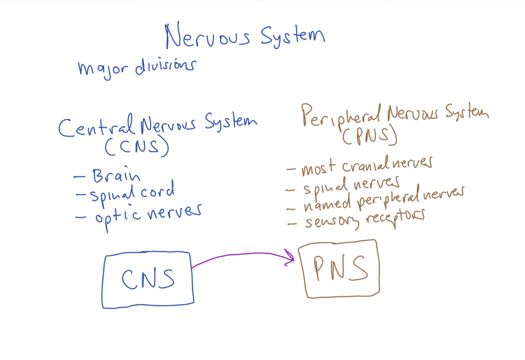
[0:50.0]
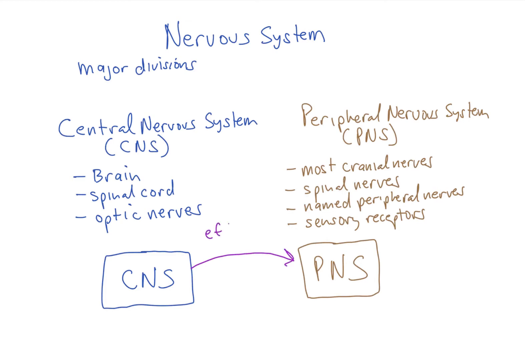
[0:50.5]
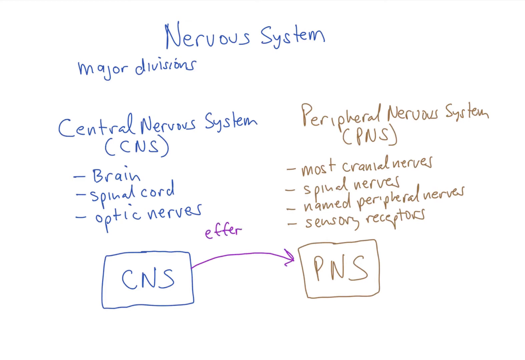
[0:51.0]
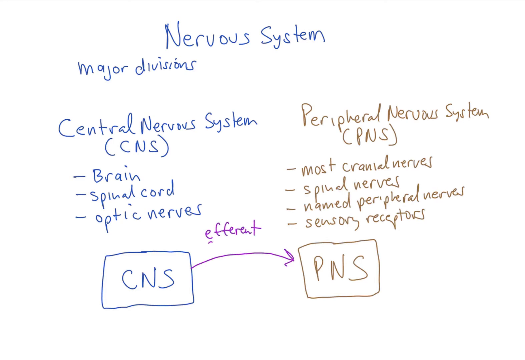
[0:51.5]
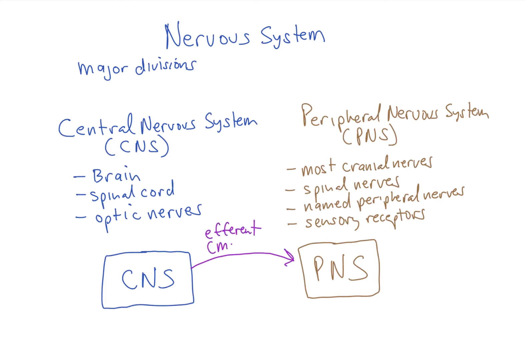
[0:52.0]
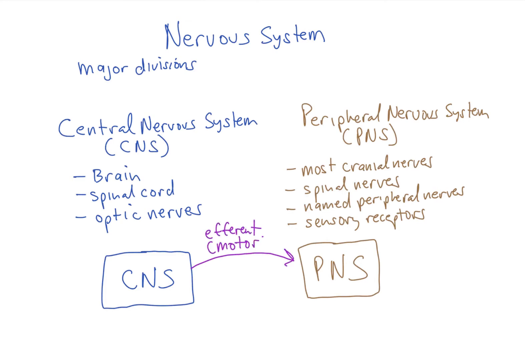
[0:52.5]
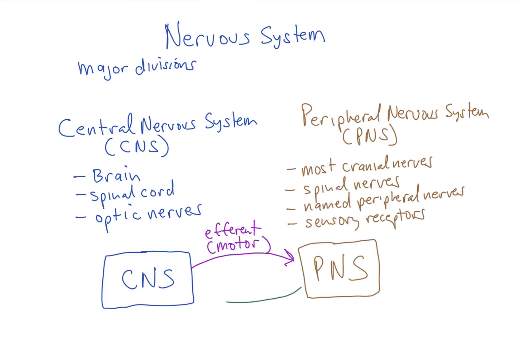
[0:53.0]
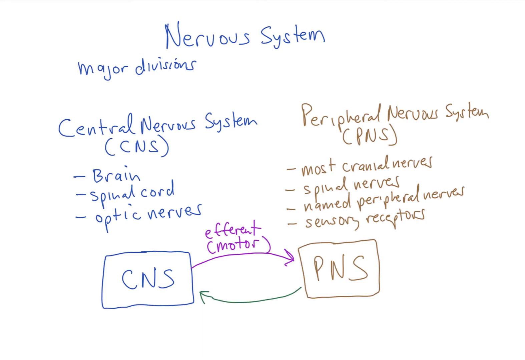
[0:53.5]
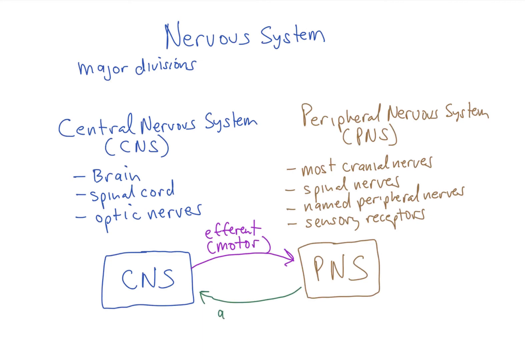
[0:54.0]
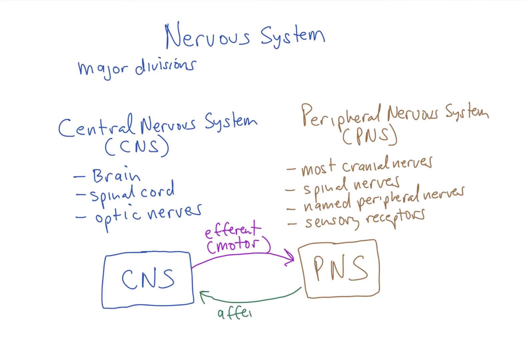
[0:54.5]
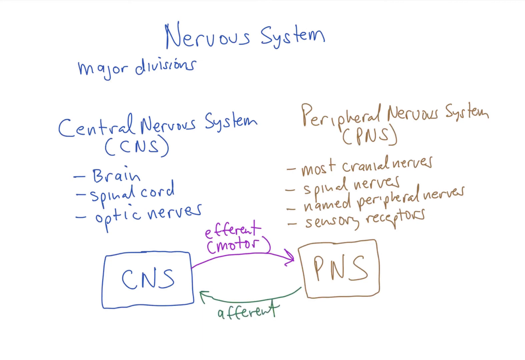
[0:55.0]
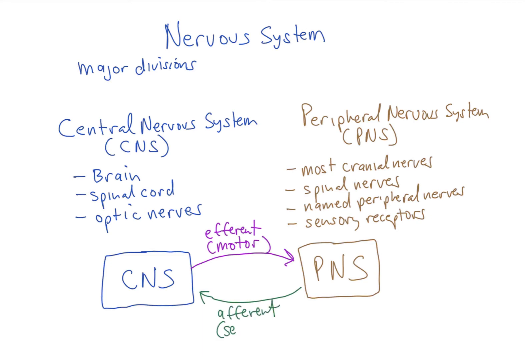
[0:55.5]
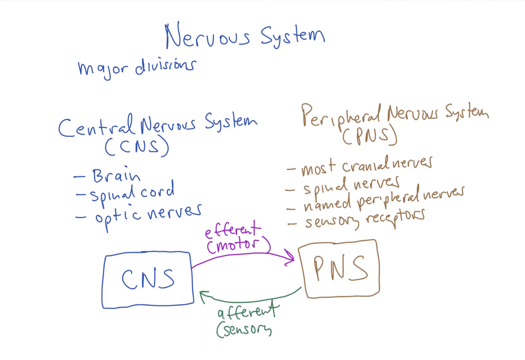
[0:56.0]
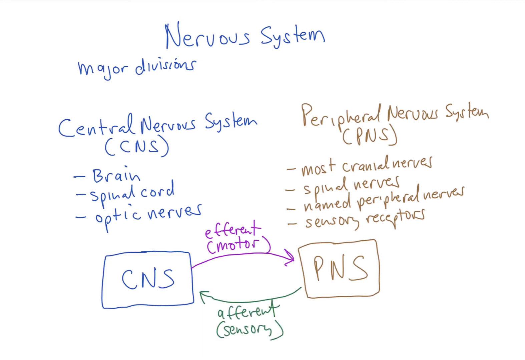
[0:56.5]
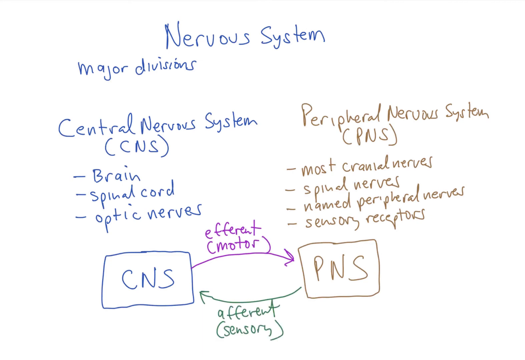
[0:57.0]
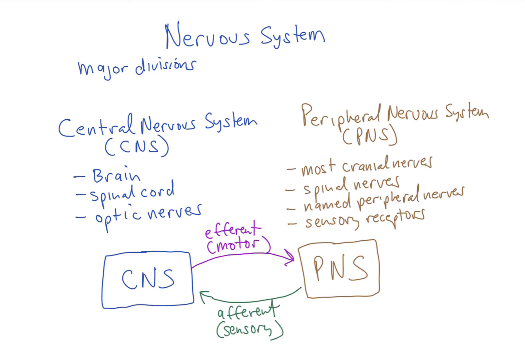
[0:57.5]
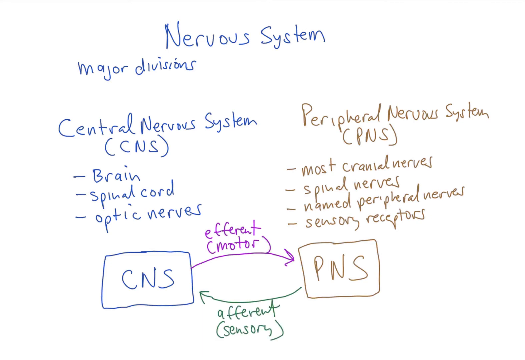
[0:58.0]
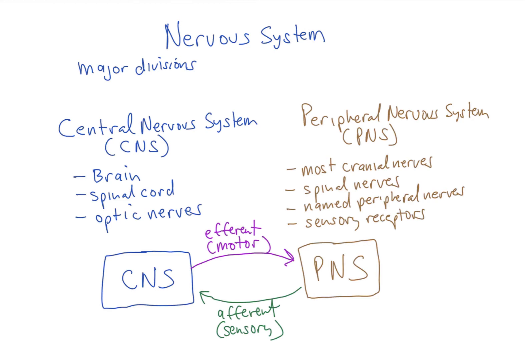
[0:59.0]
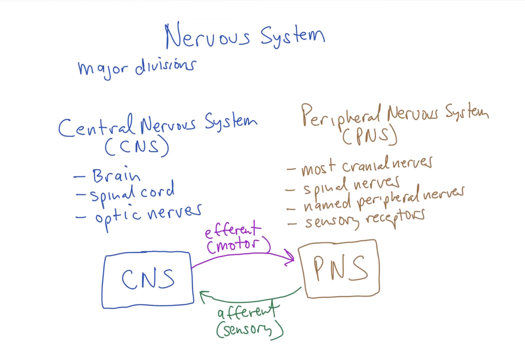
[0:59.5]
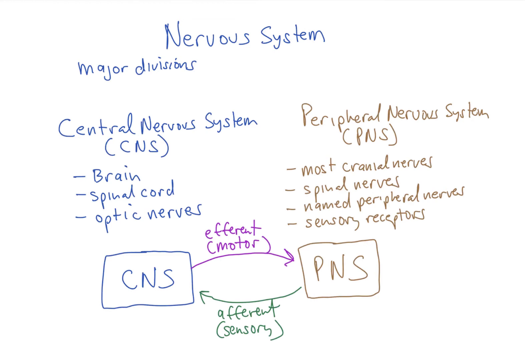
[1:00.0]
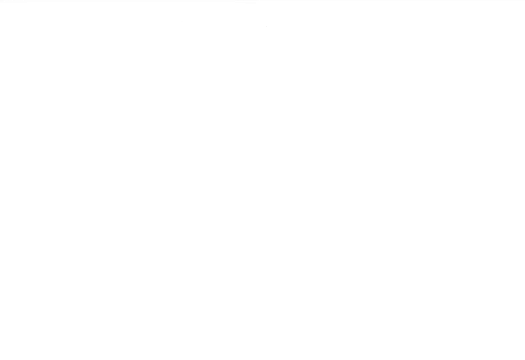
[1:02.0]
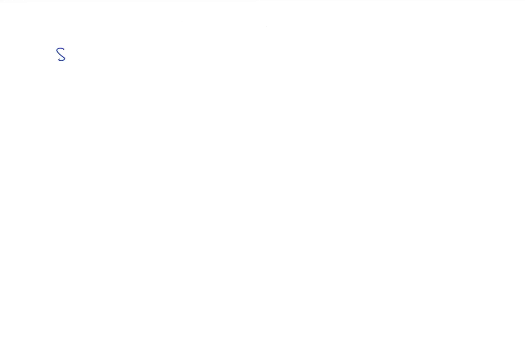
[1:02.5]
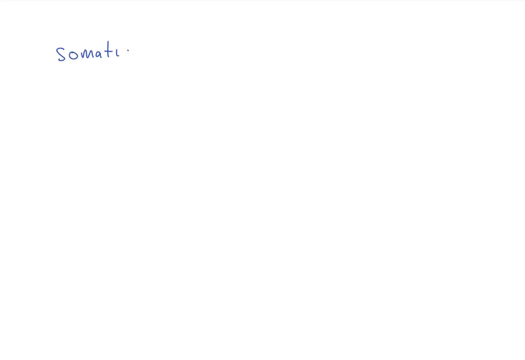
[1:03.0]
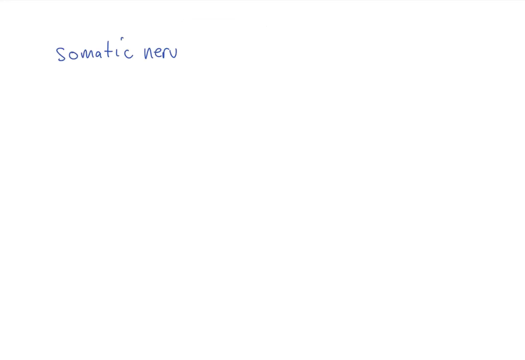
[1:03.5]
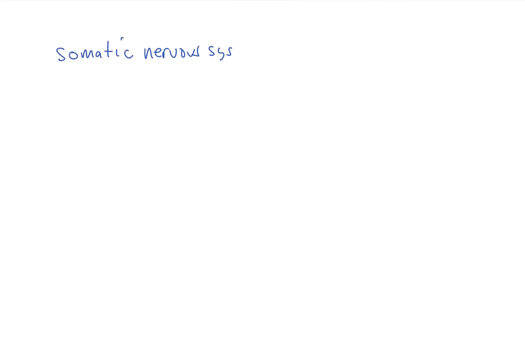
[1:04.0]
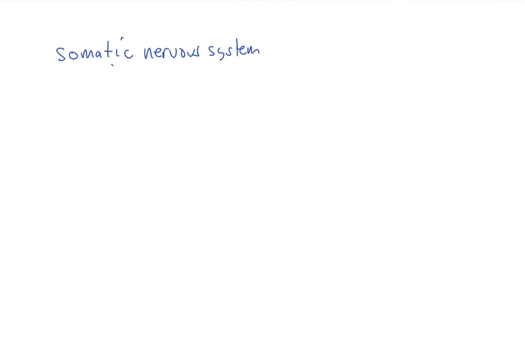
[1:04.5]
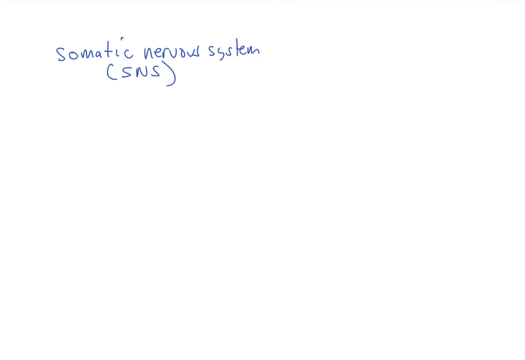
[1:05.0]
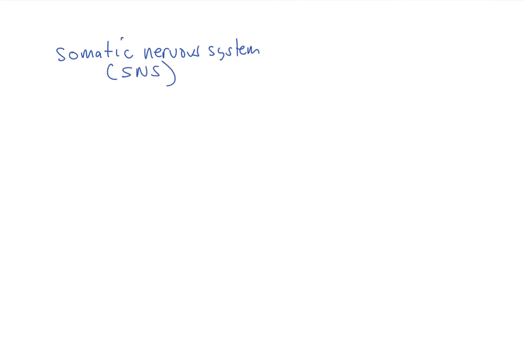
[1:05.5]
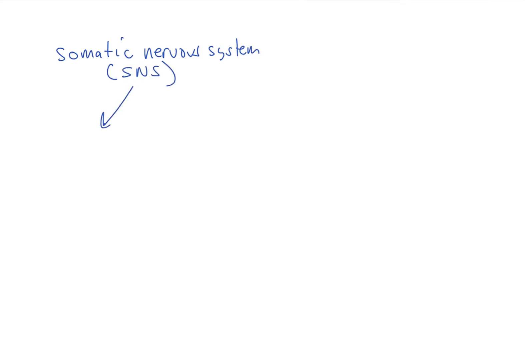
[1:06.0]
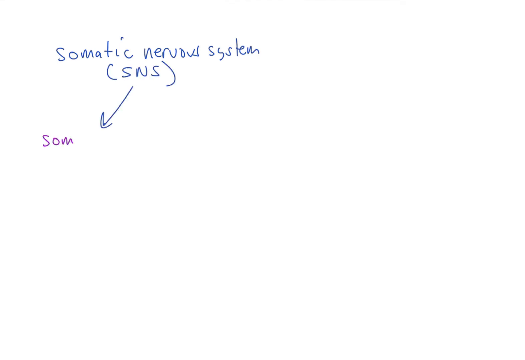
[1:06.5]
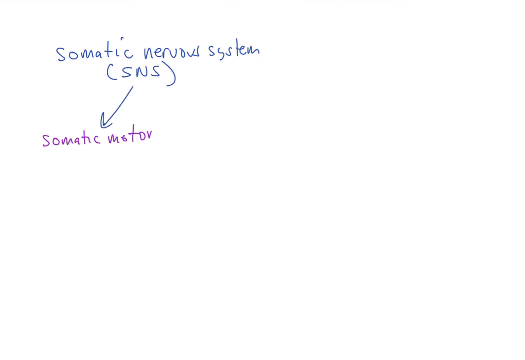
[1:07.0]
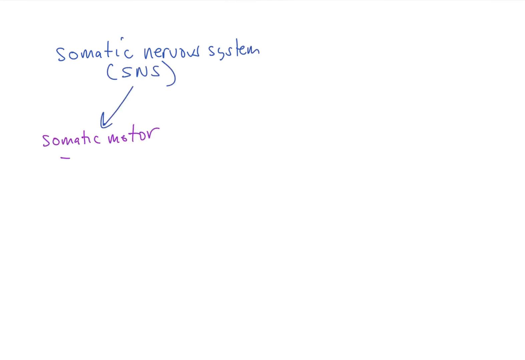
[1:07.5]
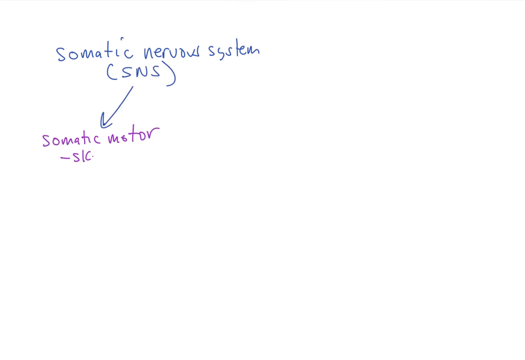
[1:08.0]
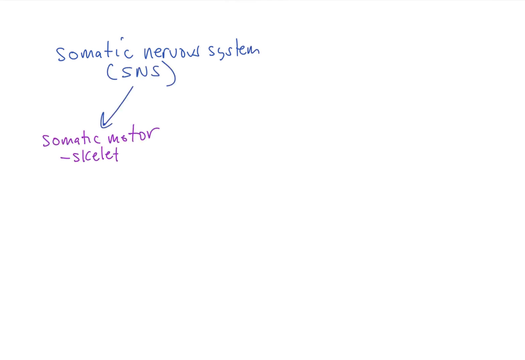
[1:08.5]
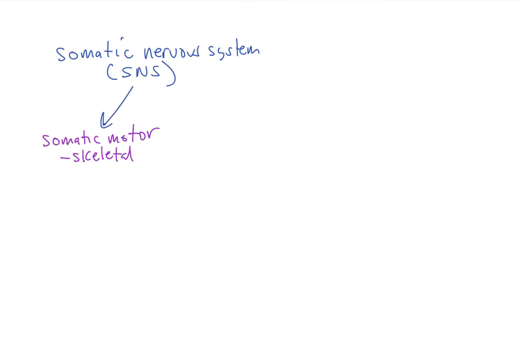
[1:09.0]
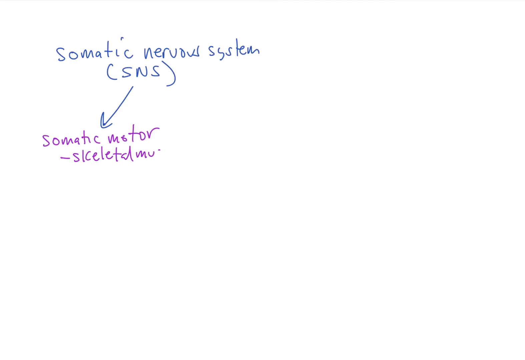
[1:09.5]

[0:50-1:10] A label, "efferent (motor)", is attached to the purple arrow drawn from the CNS to the PNS. A green arrow is then drawn from the PNS to the CNS, pointing towards the central nervous system box, and underneath it the label "afferent (sensory)" is written in green. The screen then transitions to blank, and "somatic nervous system (SNS)" is written in blue text, with an arrow pointing down towards the bottom left corner. "Somatic motor" is written in purple, and underneath it "skeletal muscles" appears as the first bullet point.